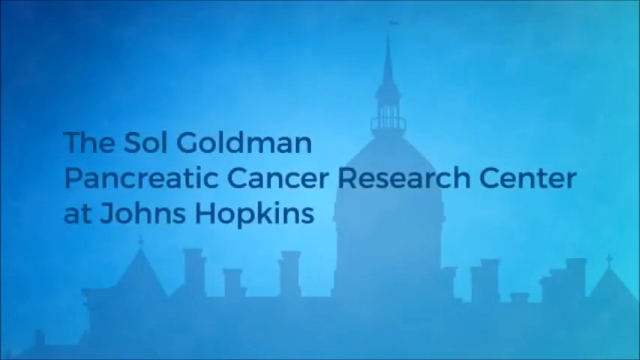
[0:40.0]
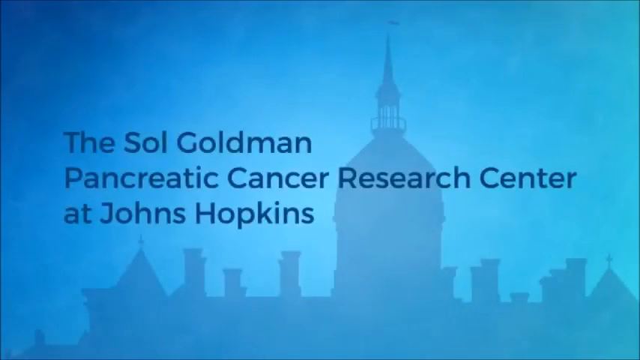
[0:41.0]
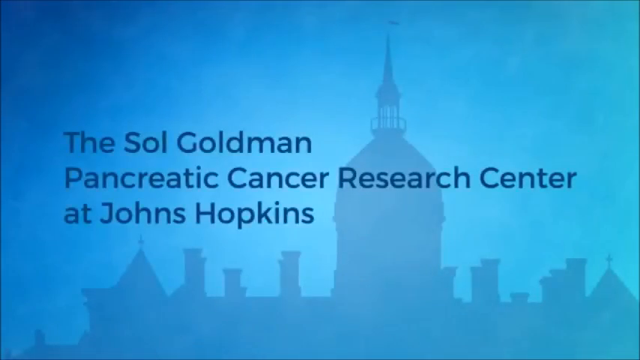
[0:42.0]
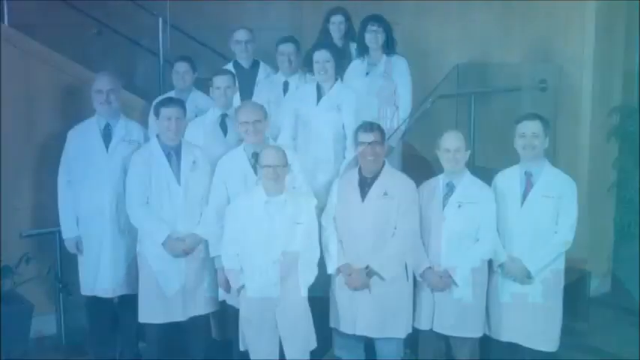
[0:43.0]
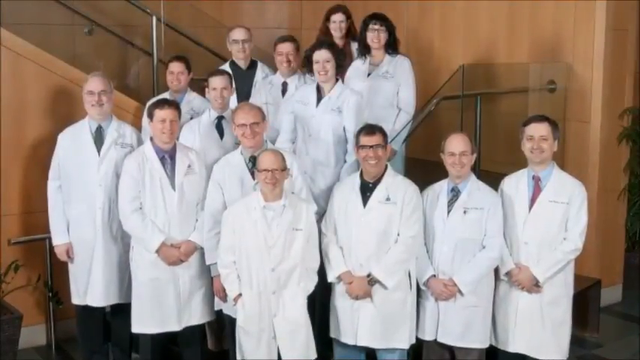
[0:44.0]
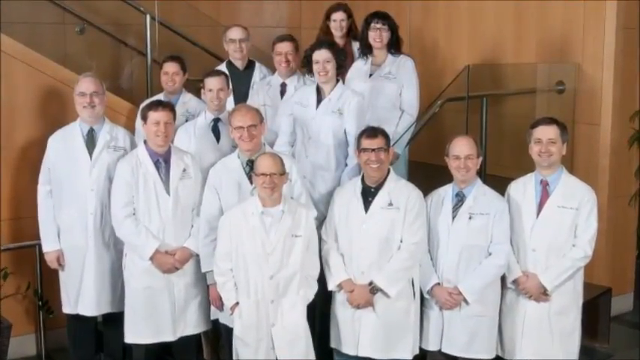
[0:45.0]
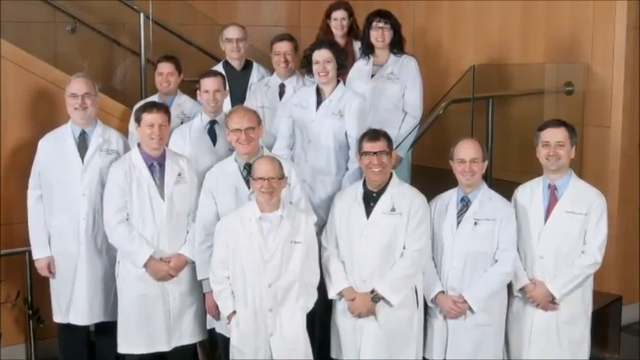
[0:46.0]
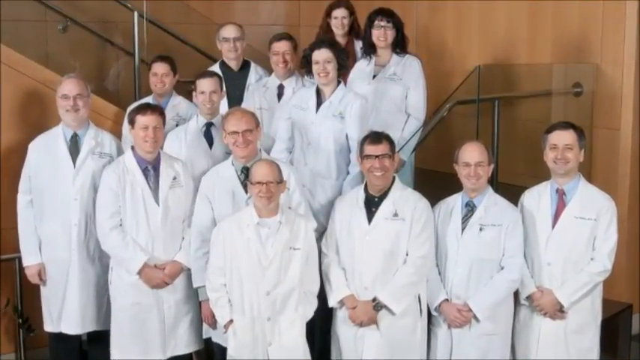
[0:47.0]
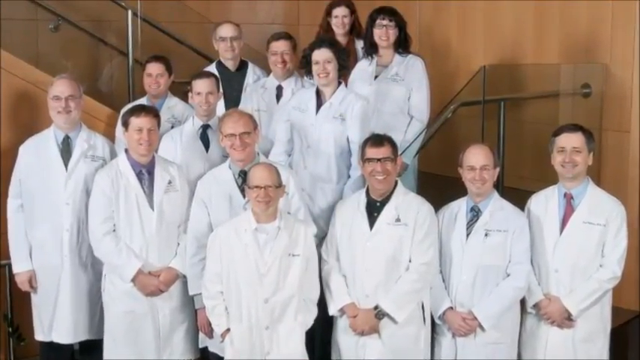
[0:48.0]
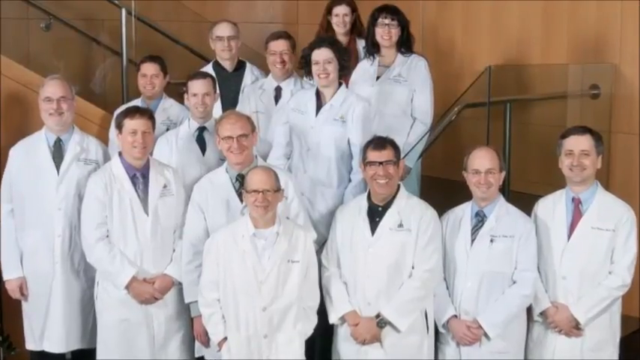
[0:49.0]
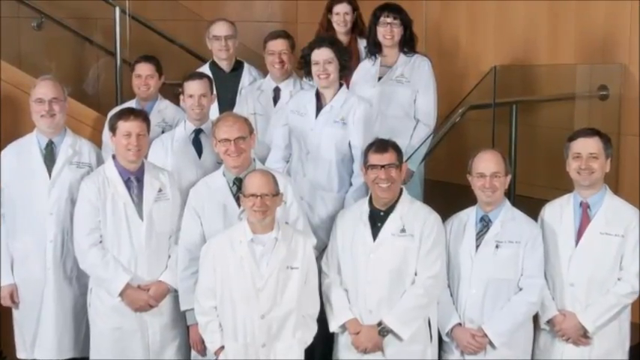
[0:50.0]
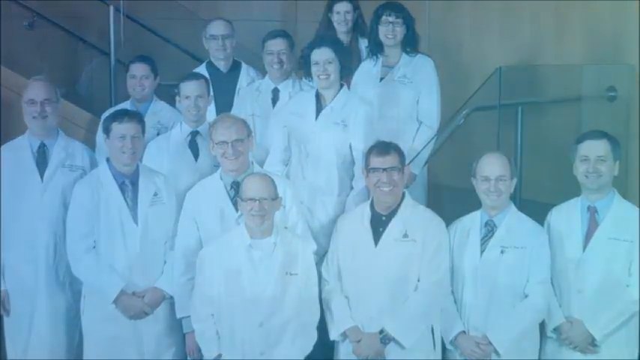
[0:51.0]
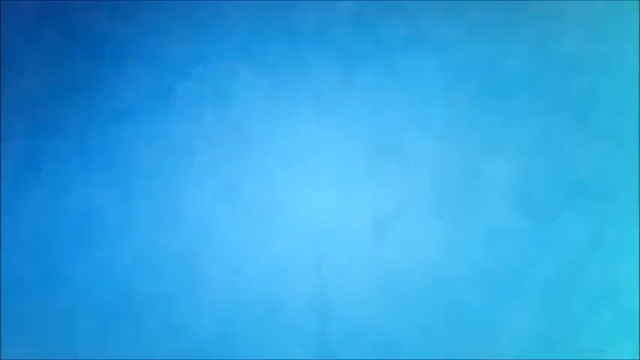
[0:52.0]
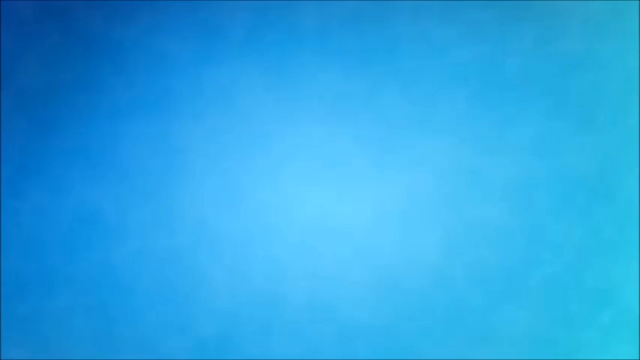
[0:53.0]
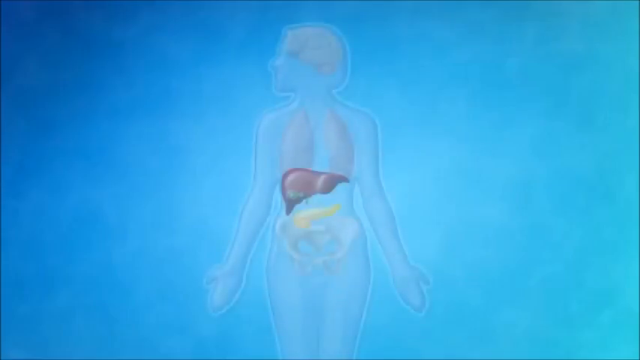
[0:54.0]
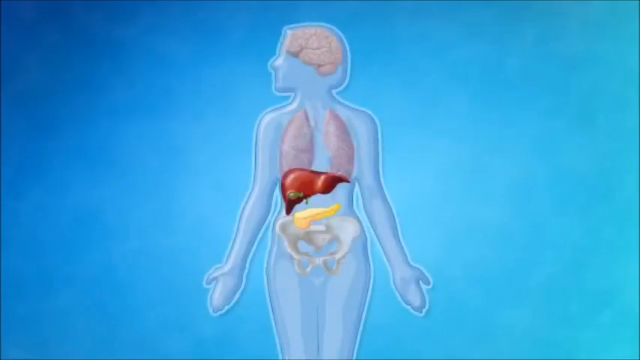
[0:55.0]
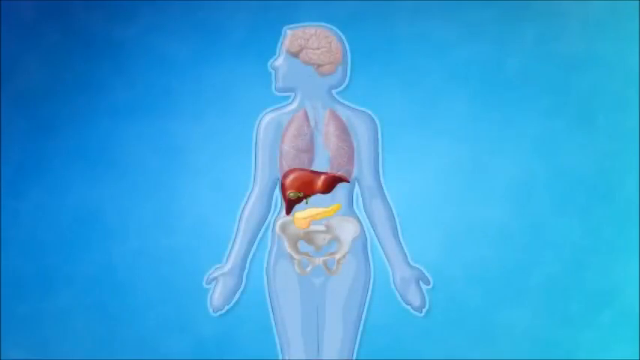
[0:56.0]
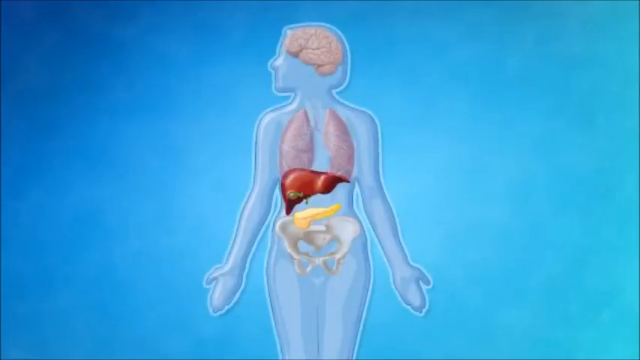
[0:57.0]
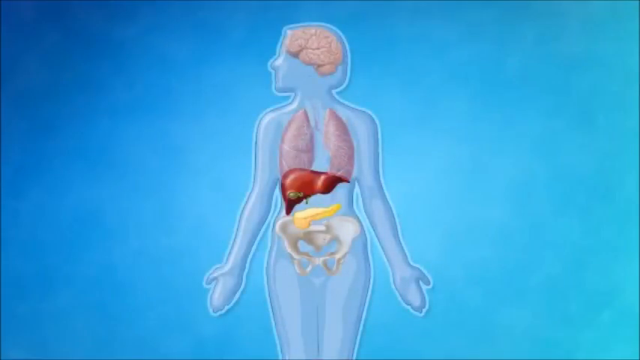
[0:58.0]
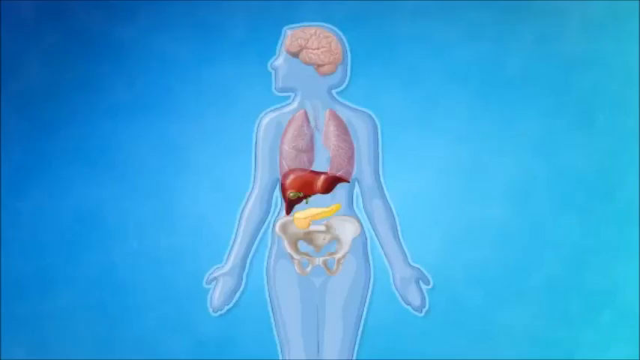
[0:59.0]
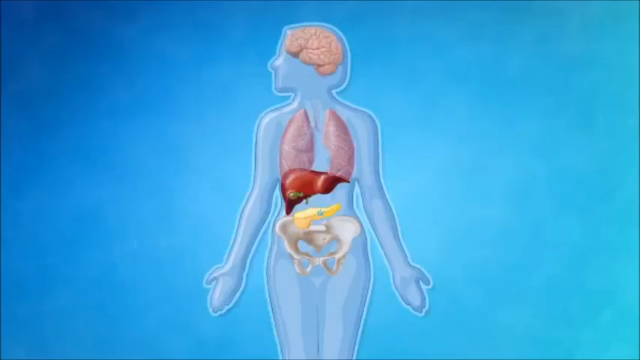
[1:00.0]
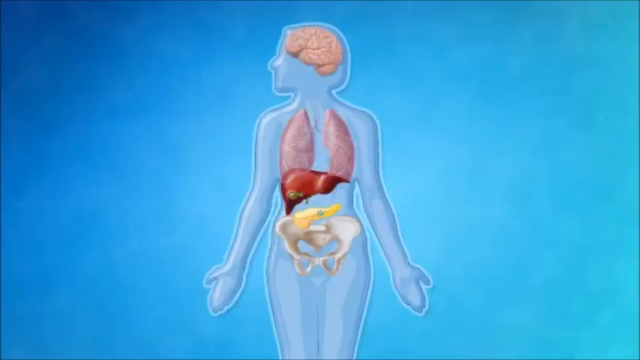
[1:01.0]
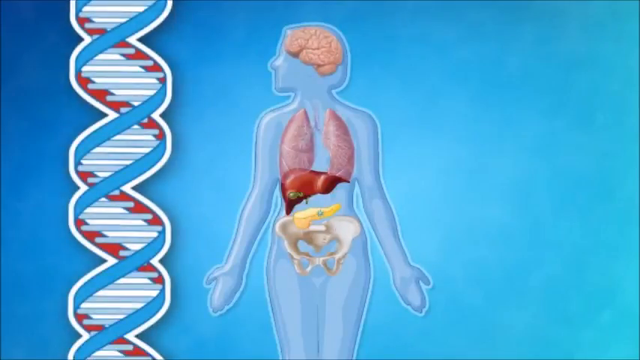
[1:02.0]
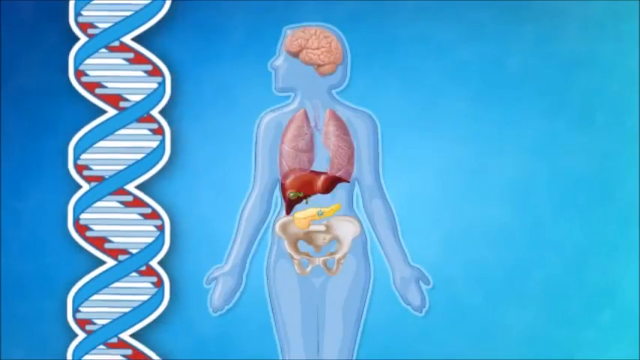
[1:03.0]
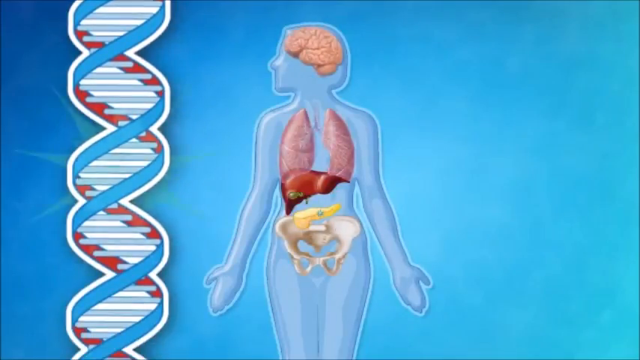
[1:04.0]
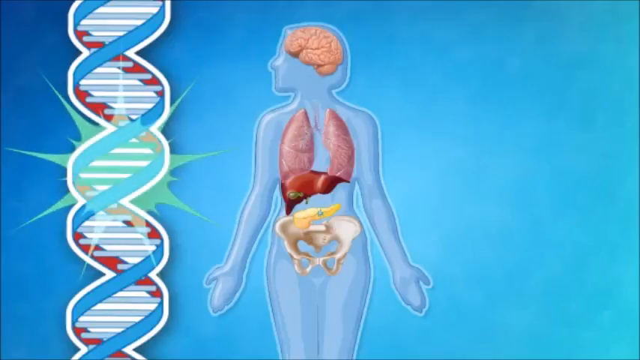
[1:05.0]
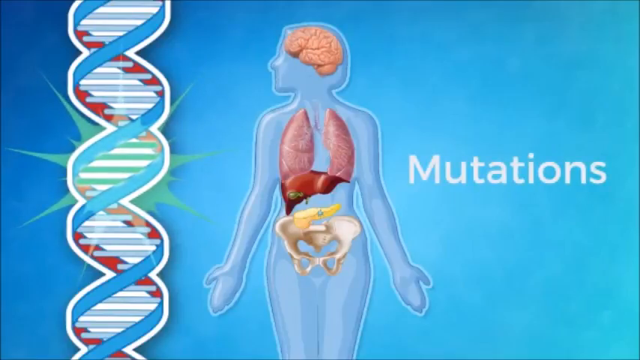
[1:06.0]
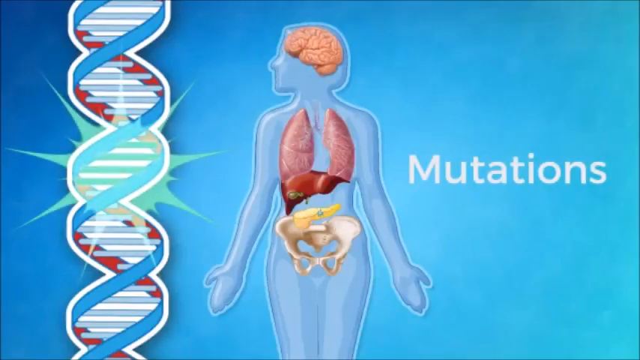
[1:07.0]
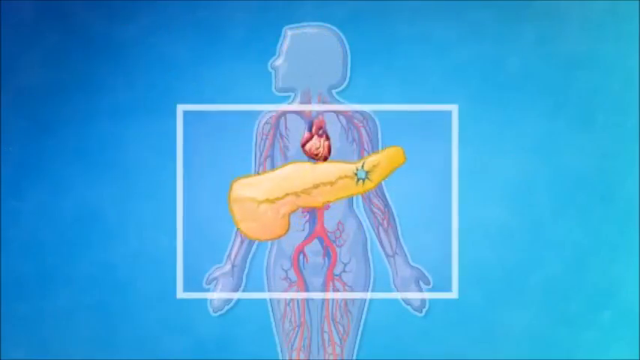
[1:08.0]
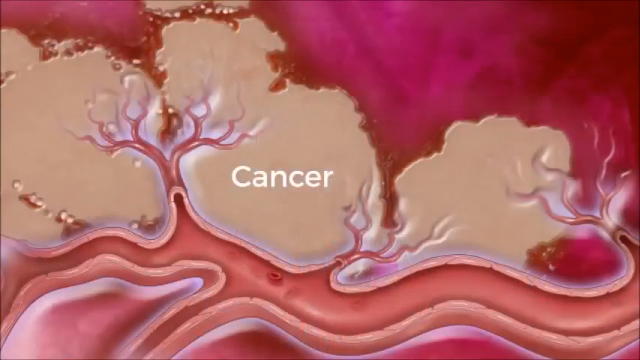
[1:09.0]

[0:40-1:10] A gradient blue background appears, darker blue in the top left corner and lighter toward the right side of the screen. In the background is a silhouette of the tops of buildings, some of them domed. Dark blue text appears, centered but positioned toward the left in three lines: "the Sol Goldman Pancreatic Cancer Research Center at Johns Hopkins". The image then transitions to a group of doctors in white lab coats taking a group photo on and around a staircase with glass sides. They are stair-stepped: at the very top of the first landing are two women, on the step below them are three doctors, on the step below that are two more doctors, and the rest of the doctors are standing all around the front of the staircase, in a wood-paneled atrium area.